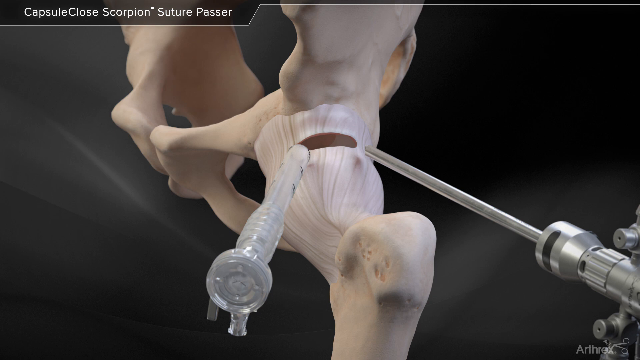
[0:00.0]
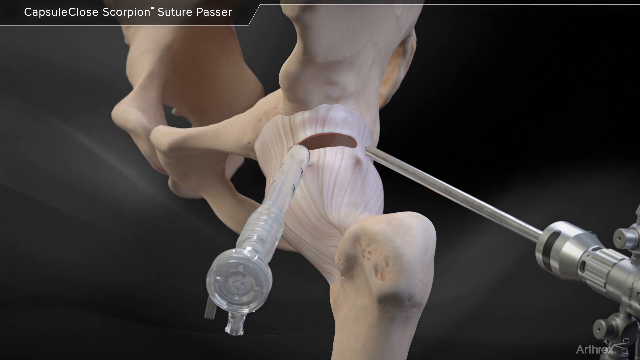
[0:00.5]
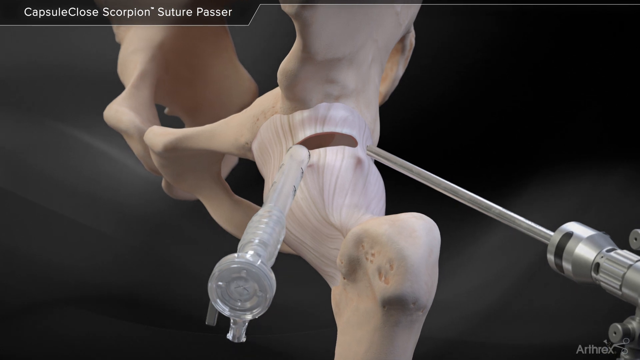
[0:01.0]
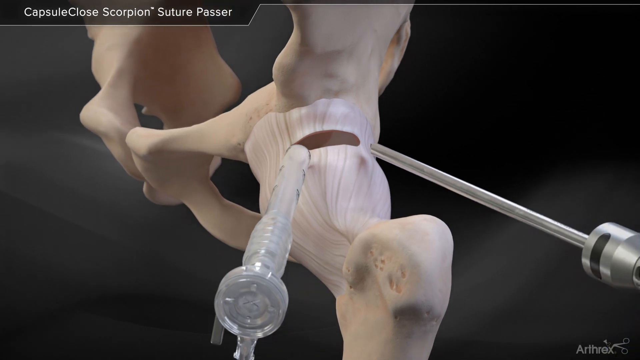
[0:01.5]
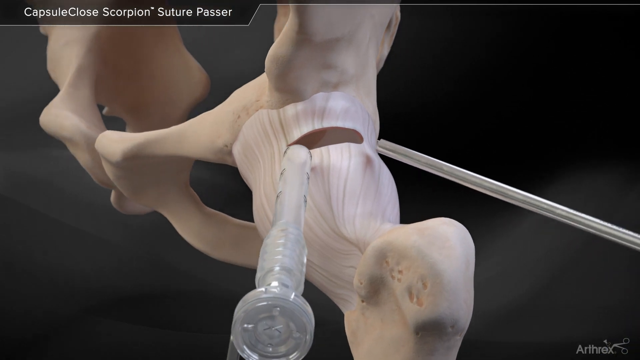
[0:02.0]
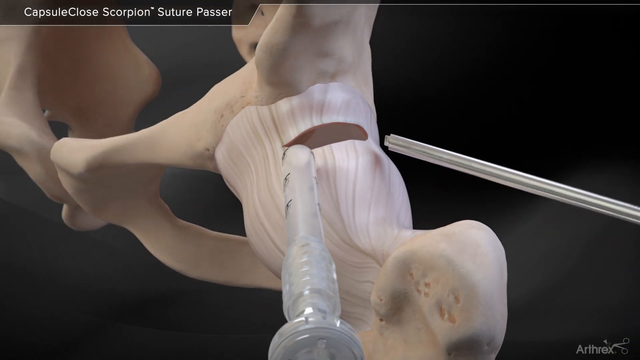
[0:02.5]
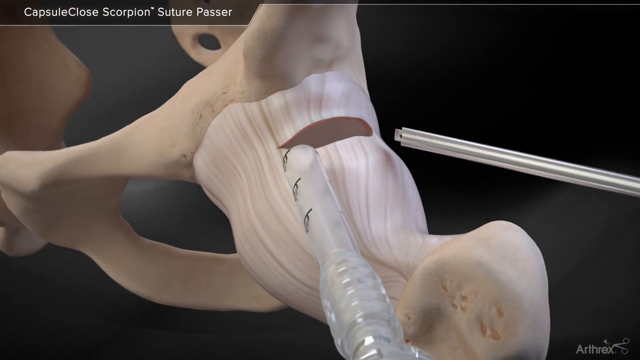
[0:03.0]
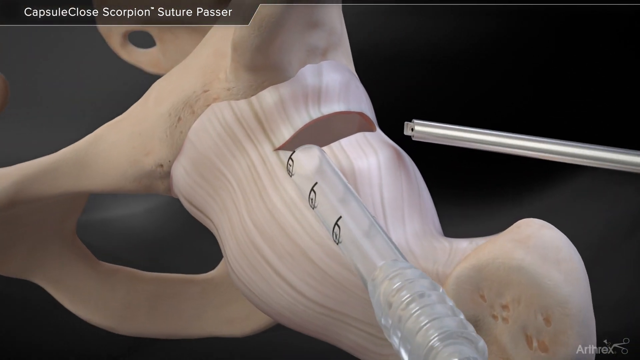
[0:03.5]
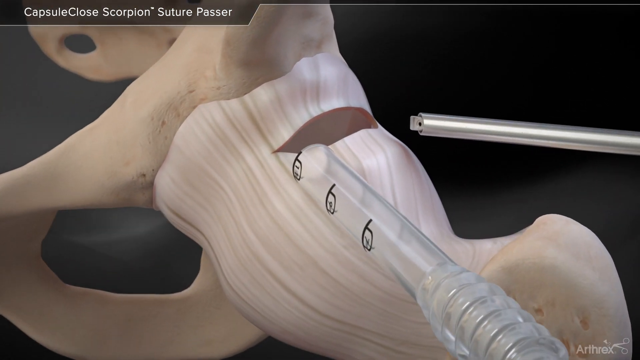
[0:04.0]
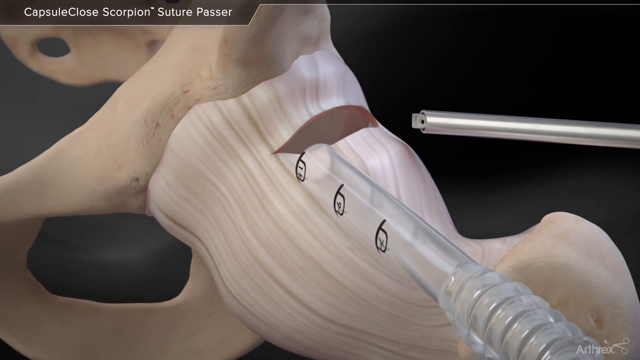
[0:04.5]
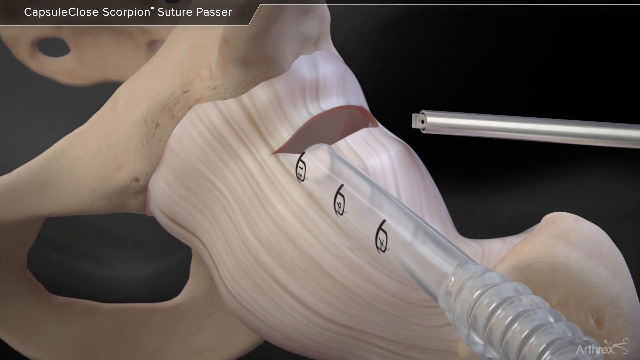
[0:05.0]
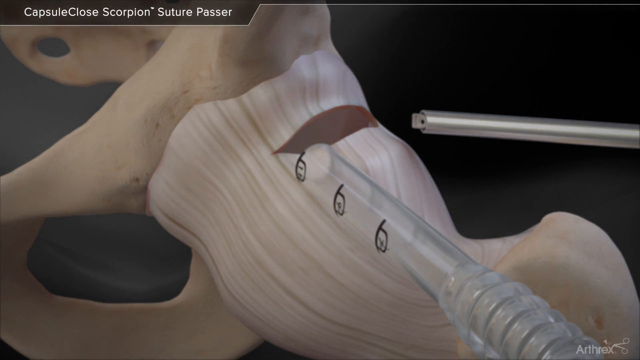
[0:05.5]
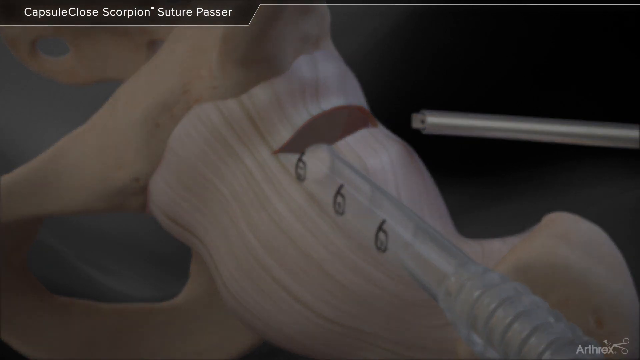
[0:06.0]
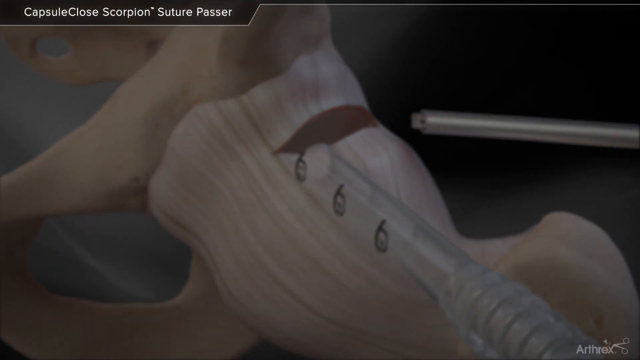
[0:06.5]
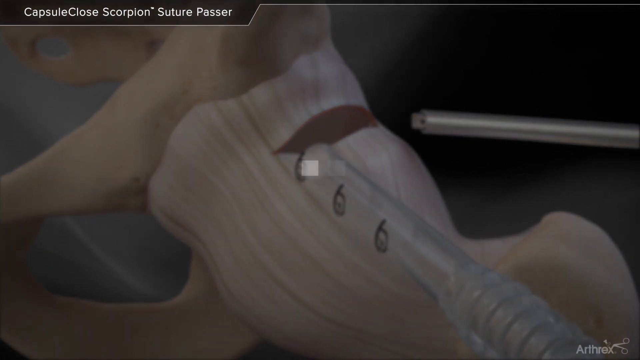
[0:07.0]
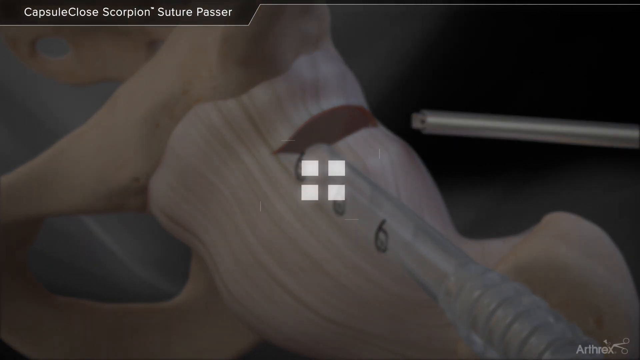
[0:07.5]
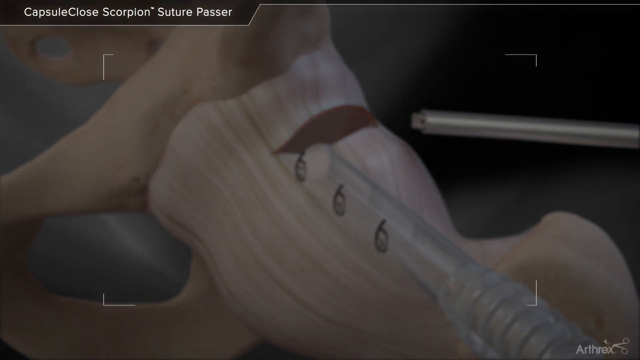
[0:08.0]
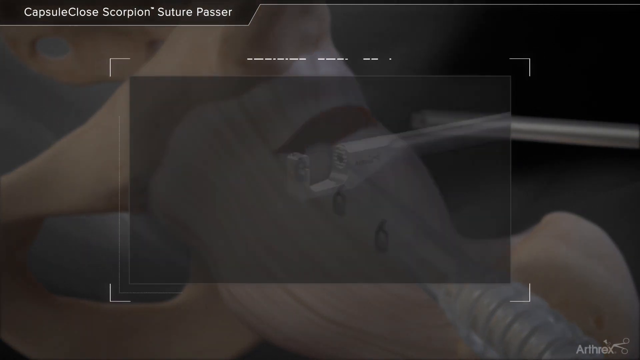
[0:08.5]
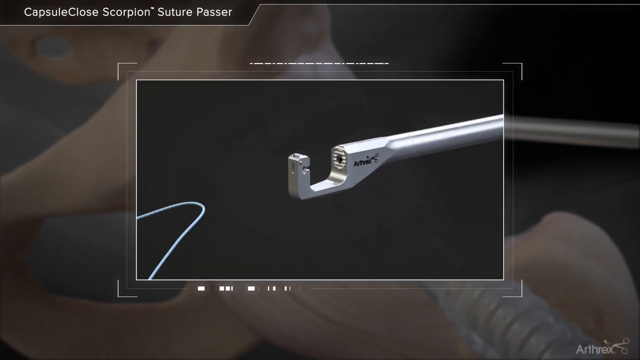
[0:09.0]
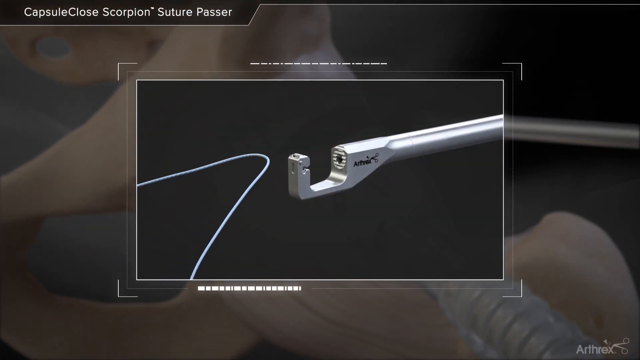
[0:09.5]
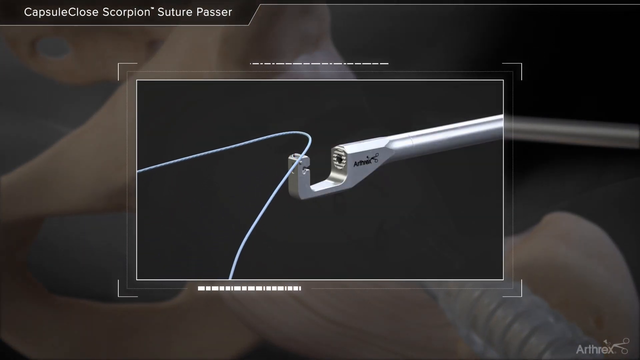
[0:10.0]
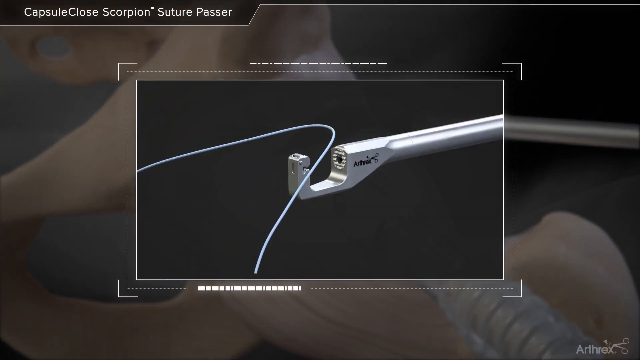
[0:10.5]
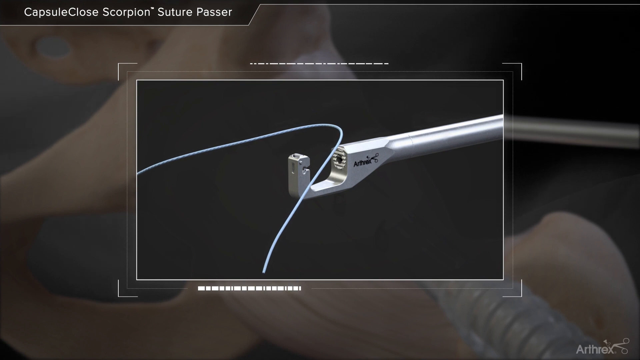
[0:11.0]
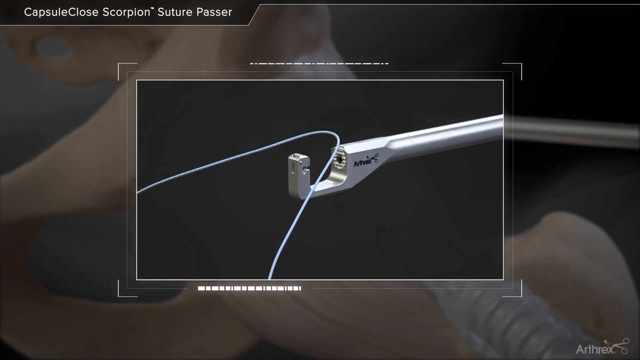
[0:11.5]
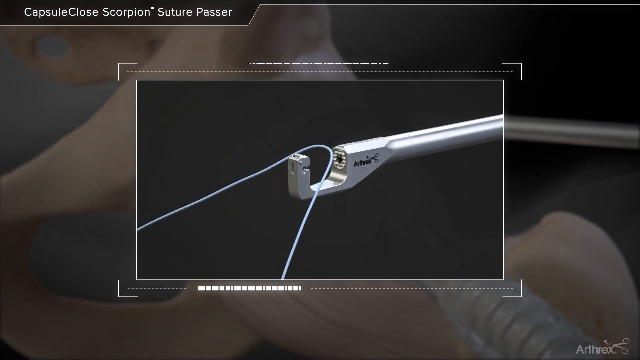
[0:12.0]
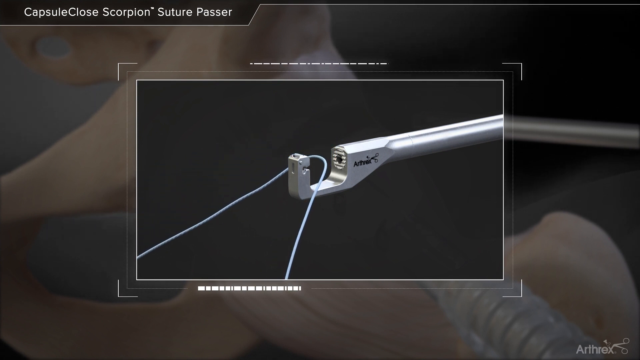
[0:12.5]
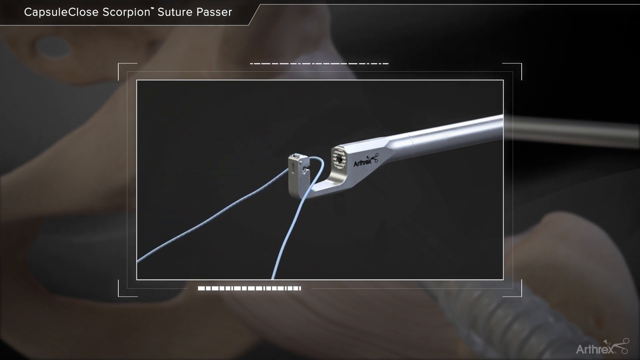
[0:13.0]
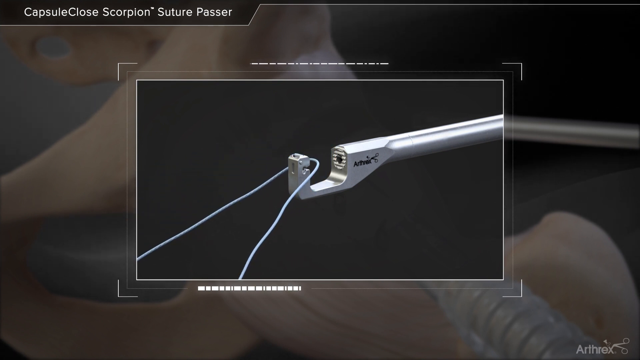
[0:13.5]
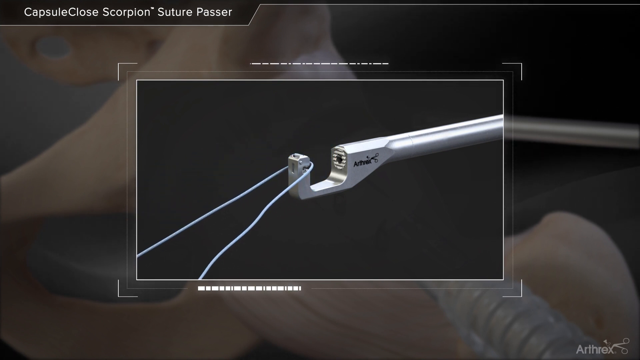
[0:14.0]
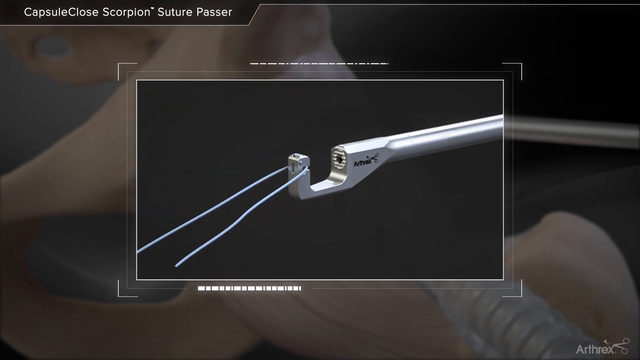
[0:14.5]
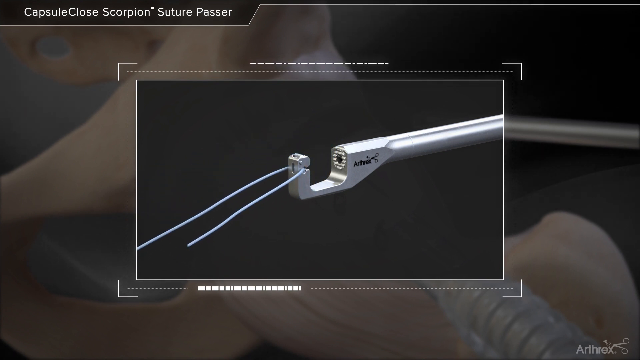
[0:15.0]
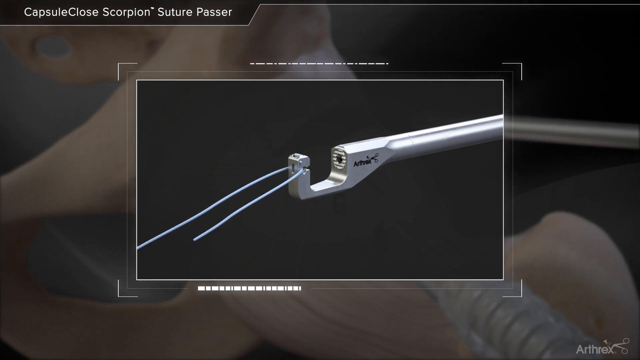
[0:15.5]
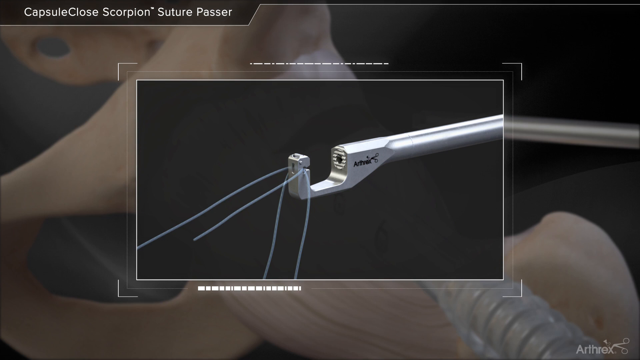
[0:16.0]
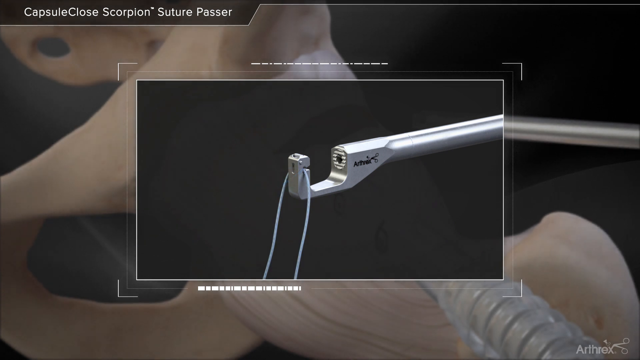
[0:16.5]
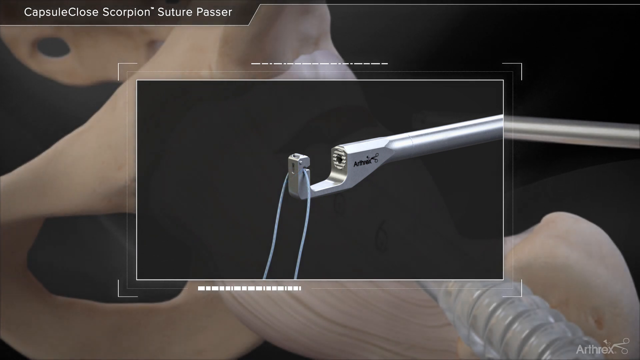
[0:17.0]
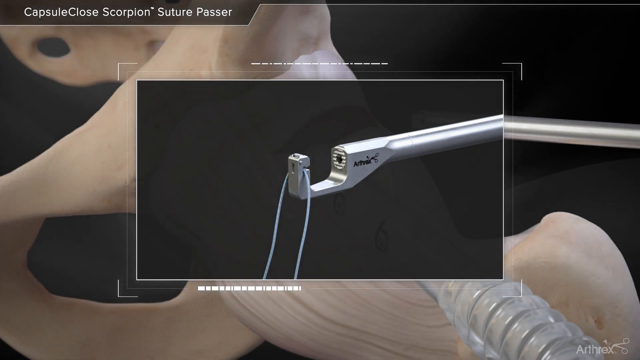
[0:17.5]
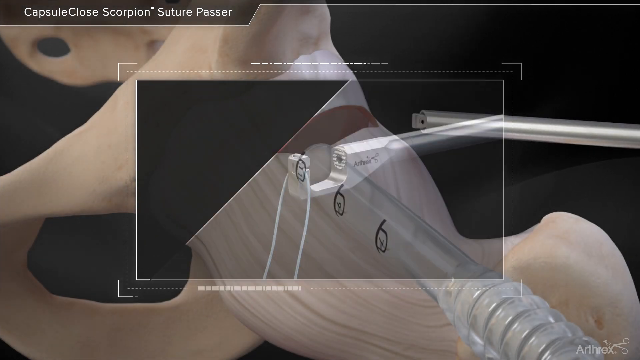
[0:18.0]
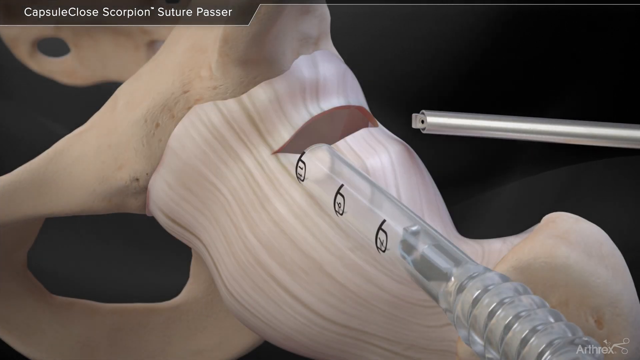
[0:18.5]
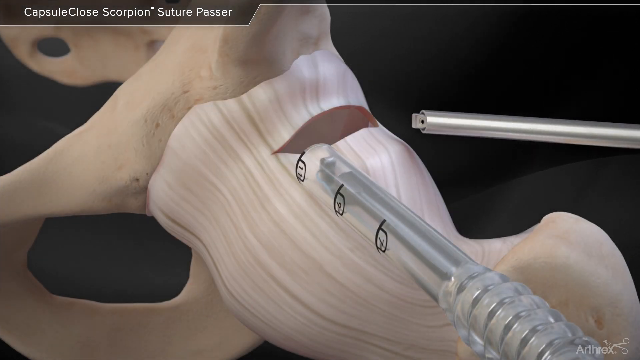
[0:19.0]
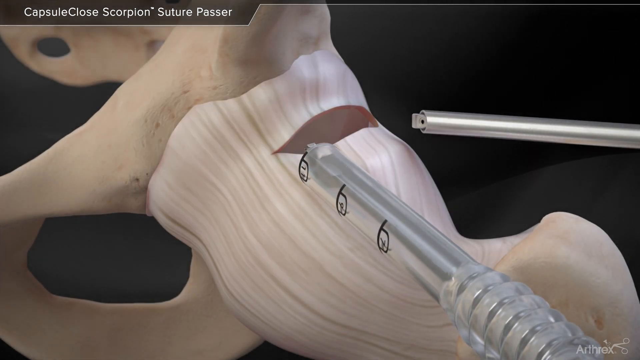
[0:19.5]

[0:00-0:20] The video is a 3D animation demonstrating how a procedure is done. The background is mostly black, with an ombre section. In the top left corner, text reads "capsule close scorpion sutur passer." The view turns toward a bone, though which bone it is is unclear. A hook with a U-shape appears, curving at its end. Then what looks like a thin metal wire, apparently not a string, hooks into part of the other material and is put inside what may be a joint, possibly in the leg or perhaps the knee.